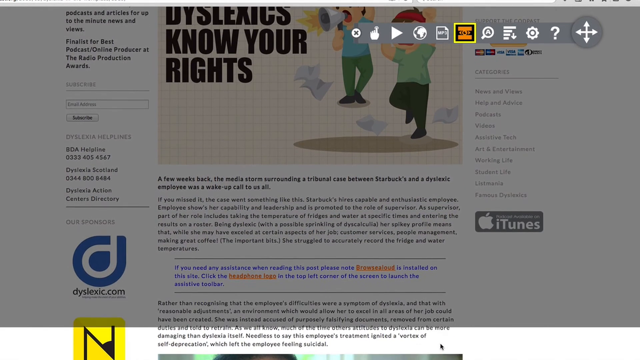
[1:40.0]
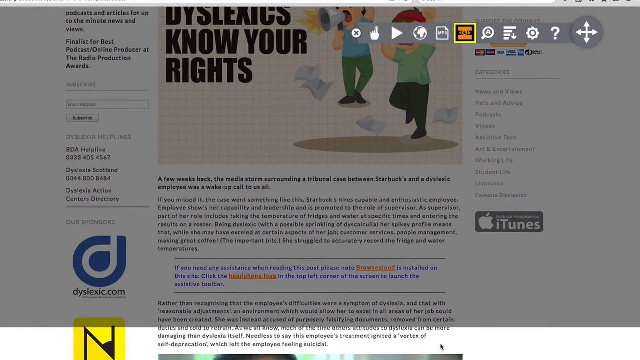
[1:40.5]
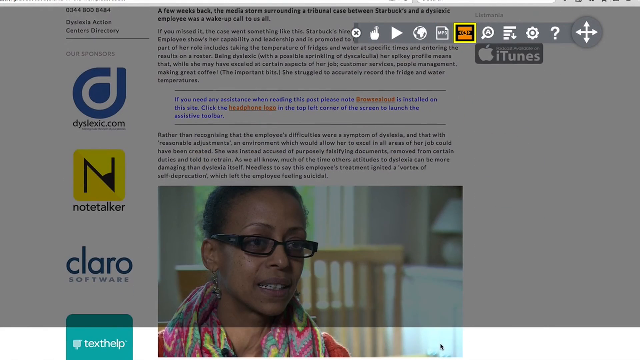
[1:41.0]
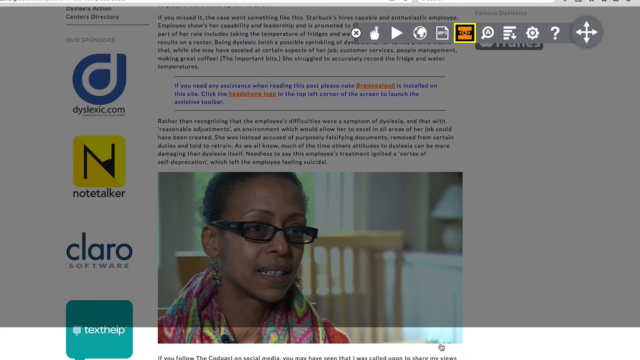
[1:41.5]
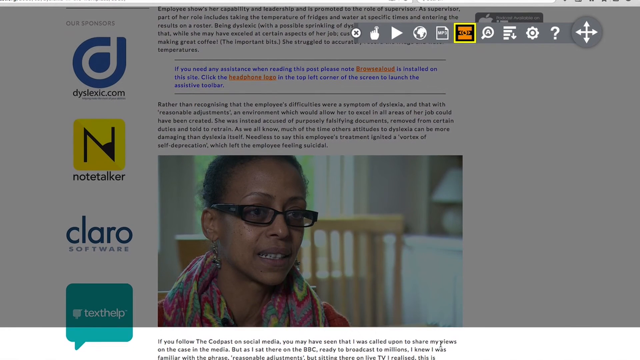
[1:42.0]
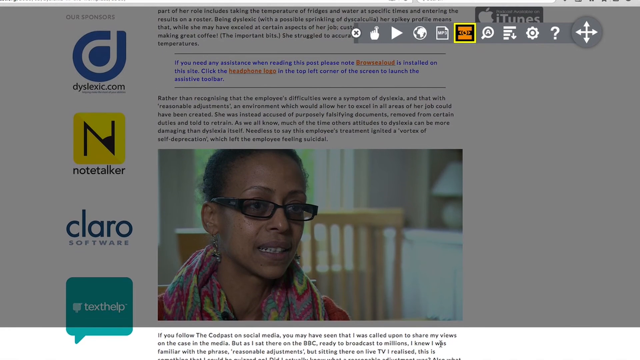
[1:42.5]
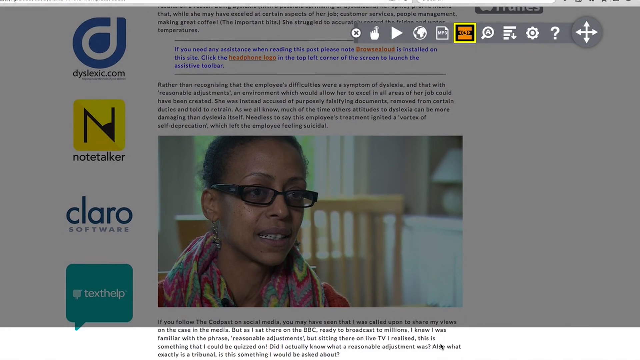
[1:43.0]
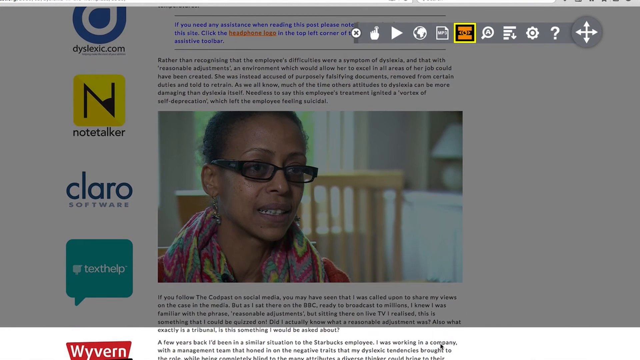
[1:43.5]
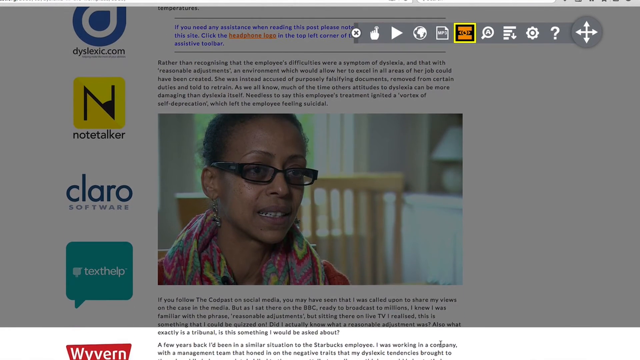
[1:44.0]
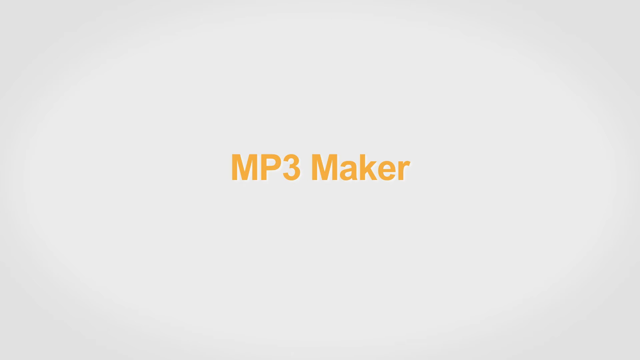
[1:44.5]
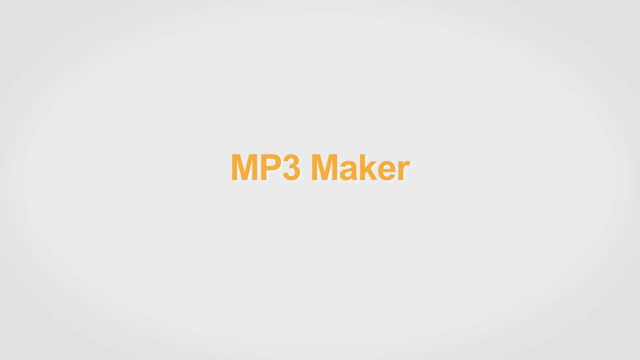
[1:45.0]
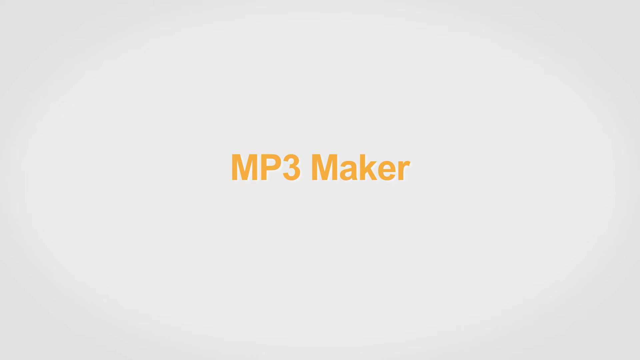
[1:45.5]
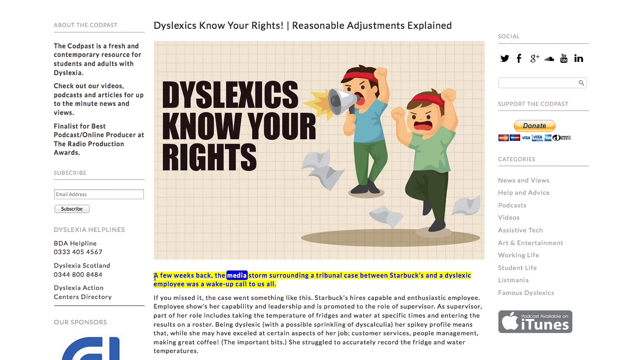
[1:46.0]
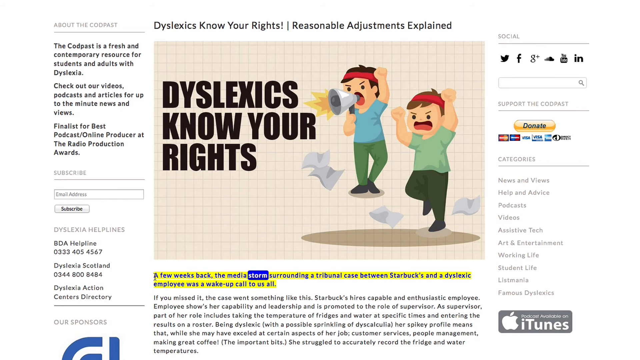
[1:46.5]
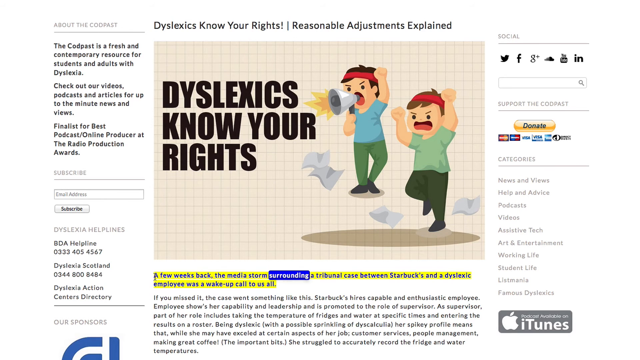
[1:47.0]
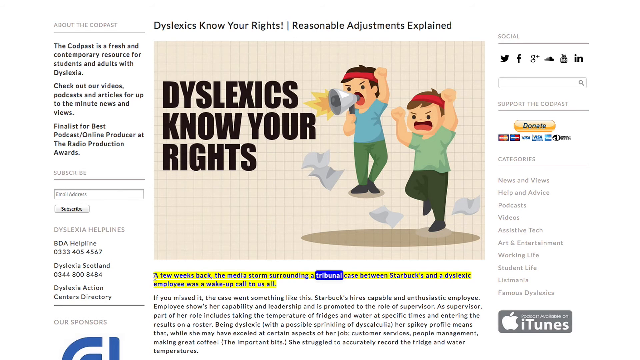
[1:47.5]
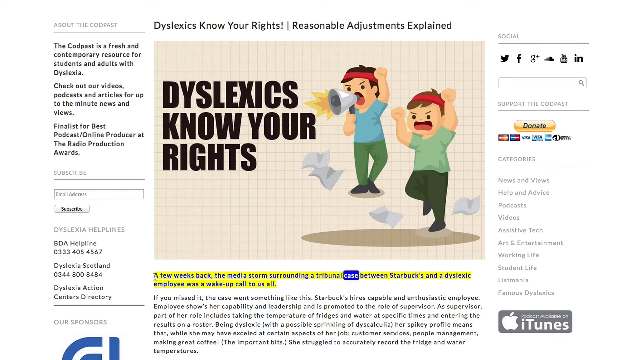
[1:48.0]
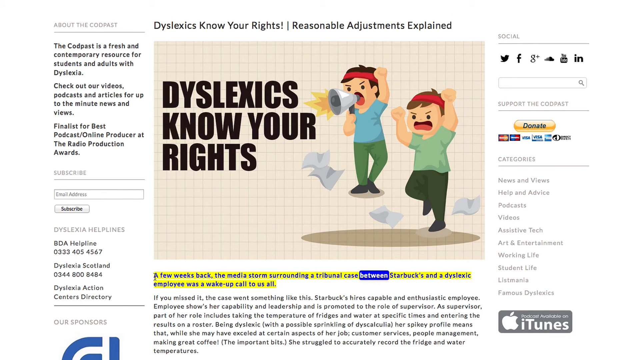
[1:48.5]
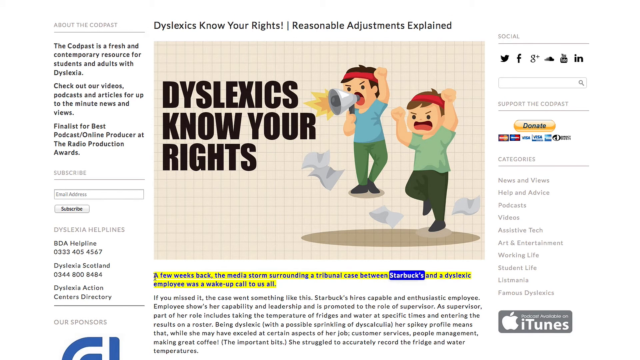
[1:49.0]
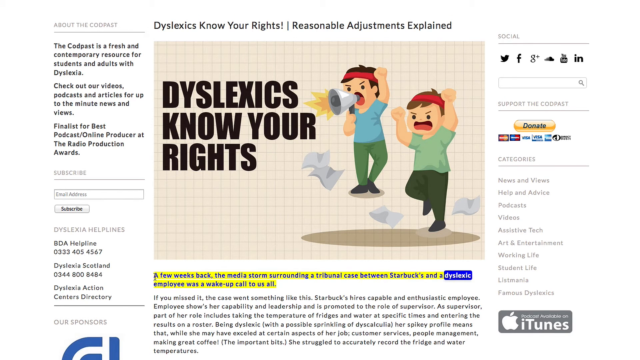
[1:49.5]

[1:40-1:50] The person uses the strip to highlight only the area they want to read. The video cuts to a white page with orange writing saying "MP3 Maker," then back to the article "Dyslexic Know Your Rights," with the two people jumping in the air with papers below them, screaming into their horns. The article is then highlighted in sections, with the words read out word by word, starting with "A few weeks back"; the word being read aloud is shown in blue.